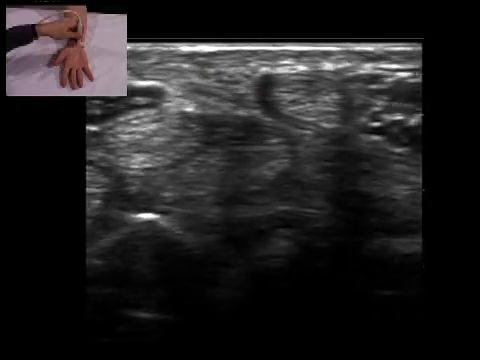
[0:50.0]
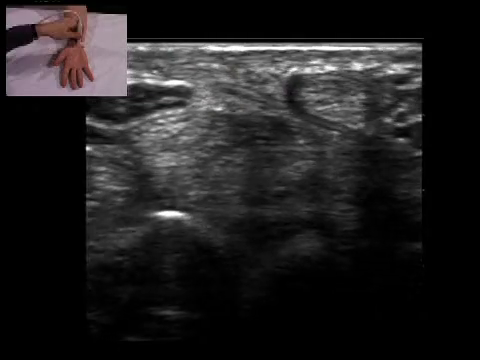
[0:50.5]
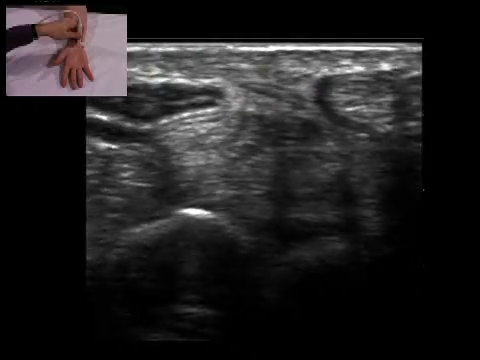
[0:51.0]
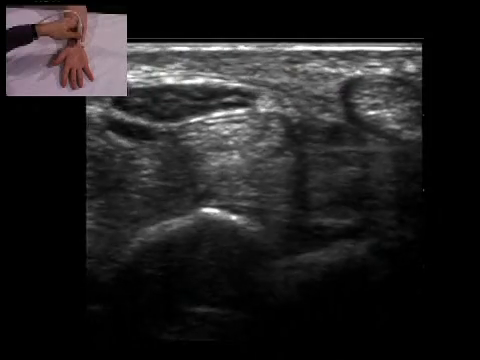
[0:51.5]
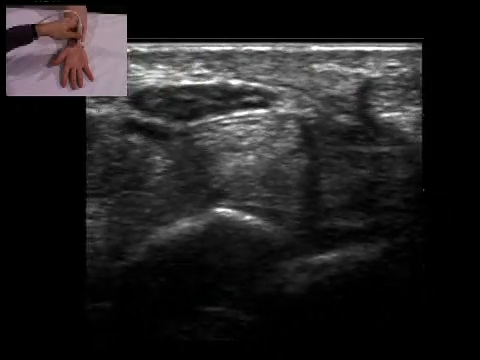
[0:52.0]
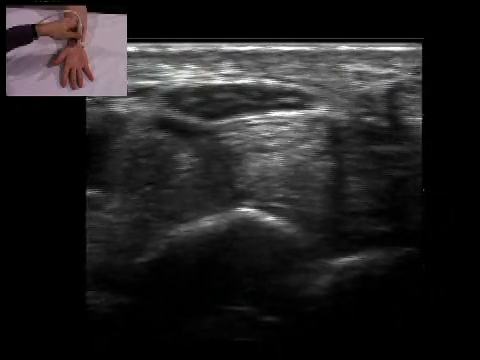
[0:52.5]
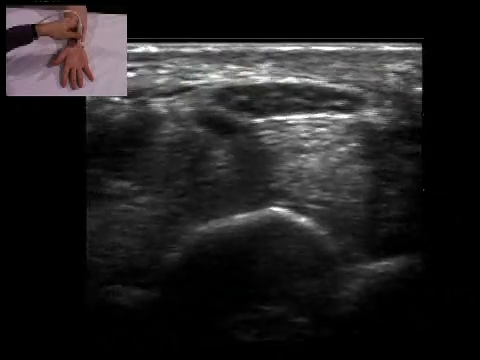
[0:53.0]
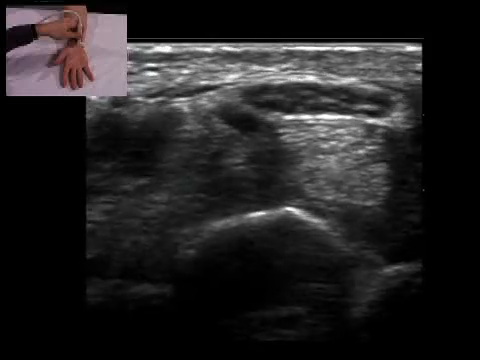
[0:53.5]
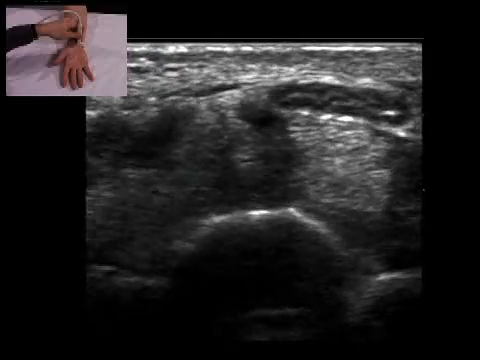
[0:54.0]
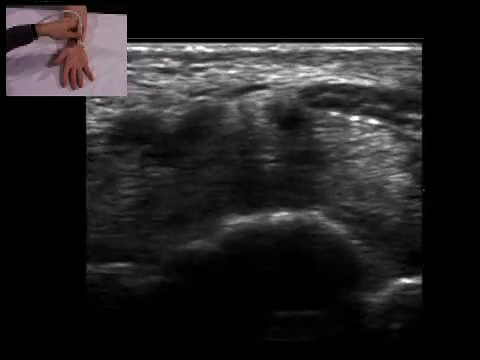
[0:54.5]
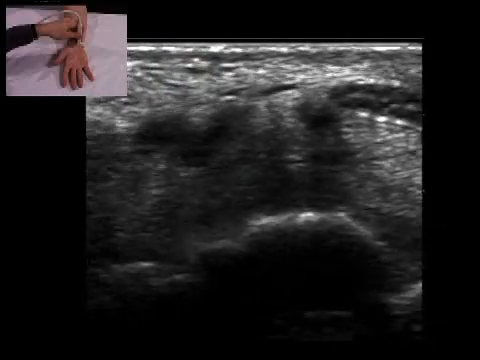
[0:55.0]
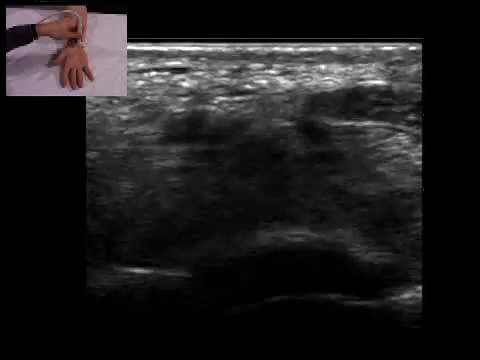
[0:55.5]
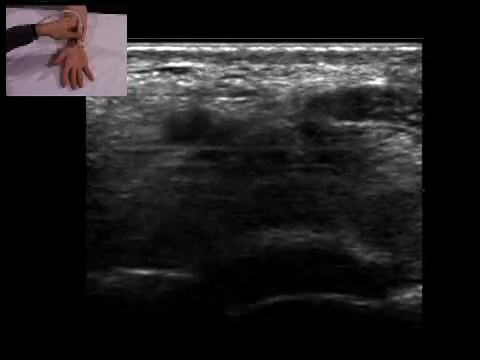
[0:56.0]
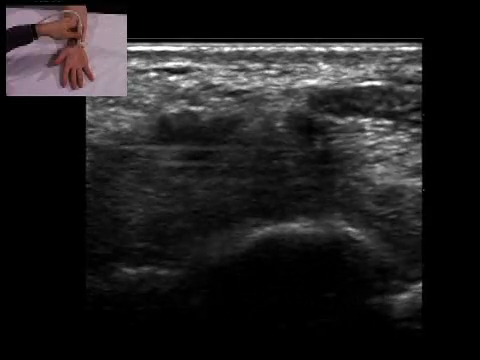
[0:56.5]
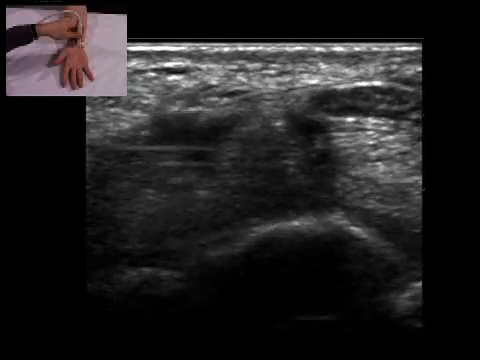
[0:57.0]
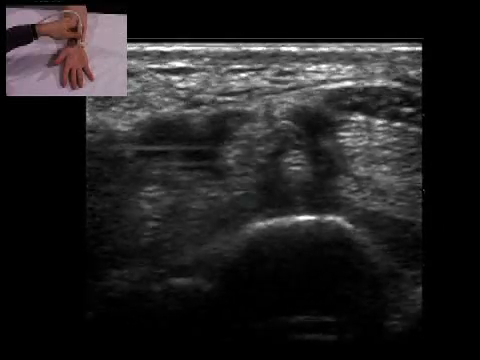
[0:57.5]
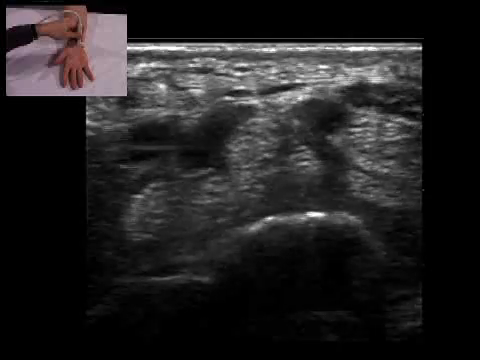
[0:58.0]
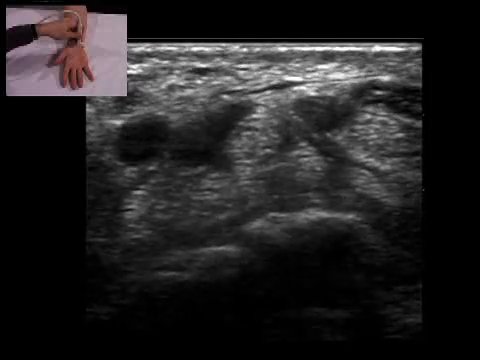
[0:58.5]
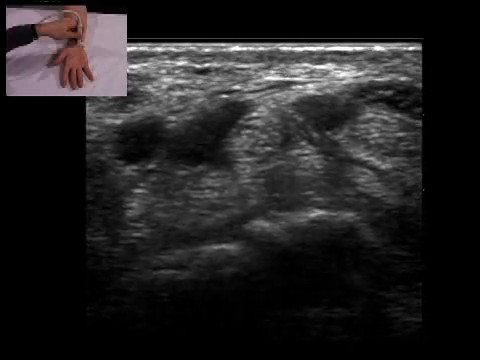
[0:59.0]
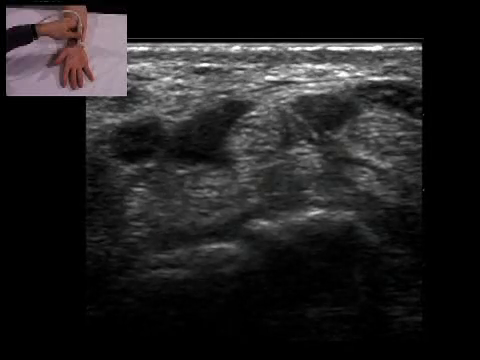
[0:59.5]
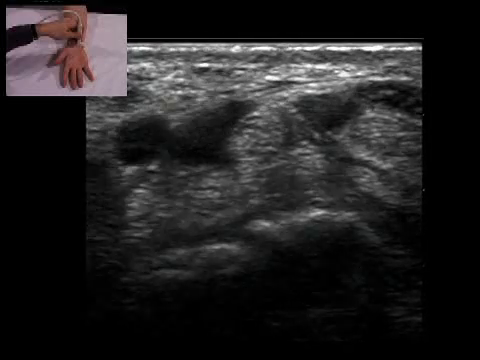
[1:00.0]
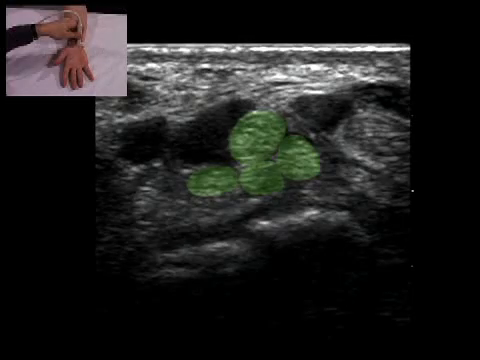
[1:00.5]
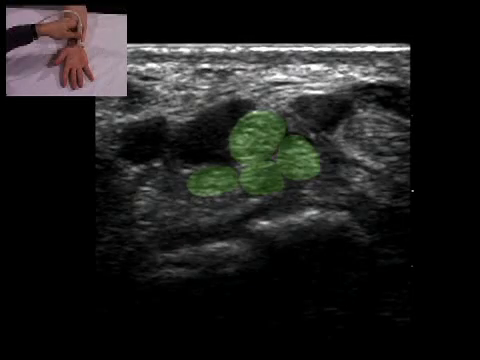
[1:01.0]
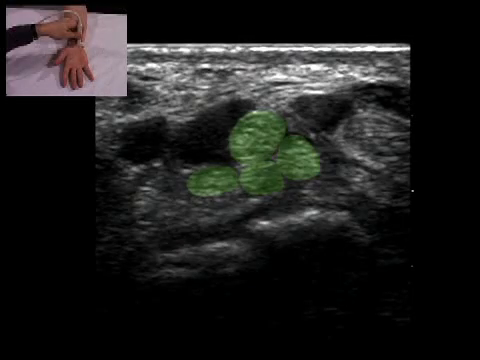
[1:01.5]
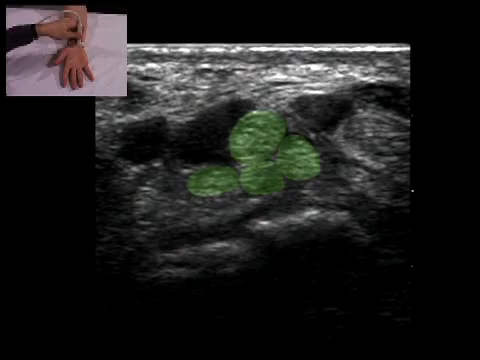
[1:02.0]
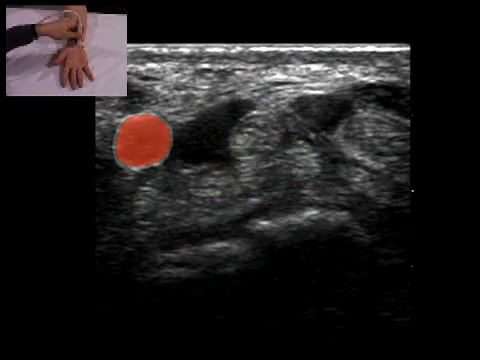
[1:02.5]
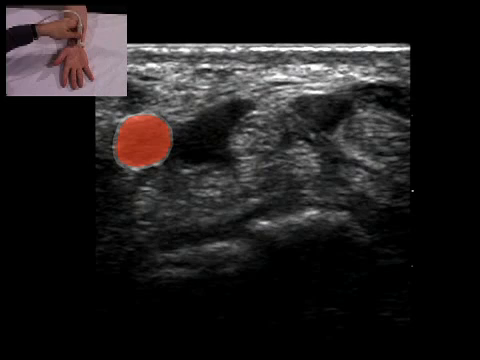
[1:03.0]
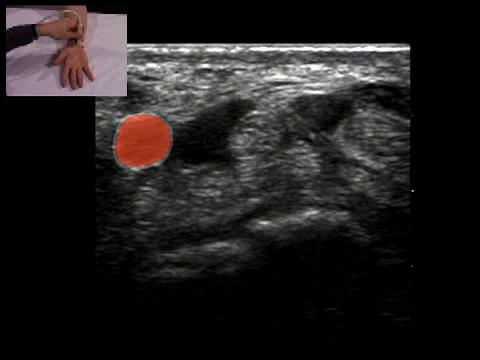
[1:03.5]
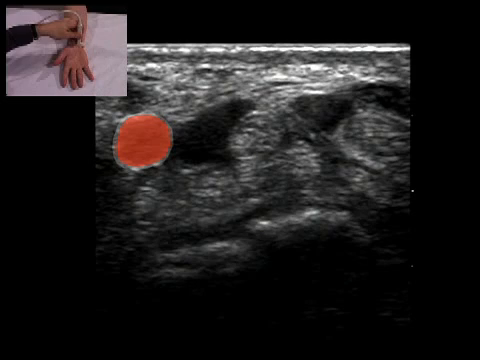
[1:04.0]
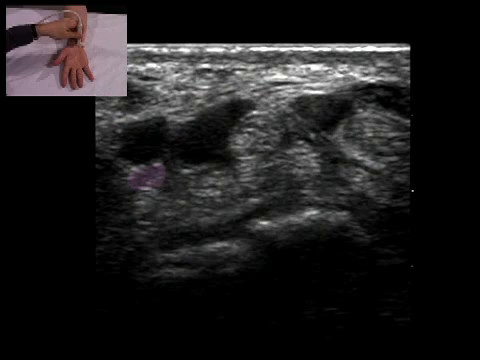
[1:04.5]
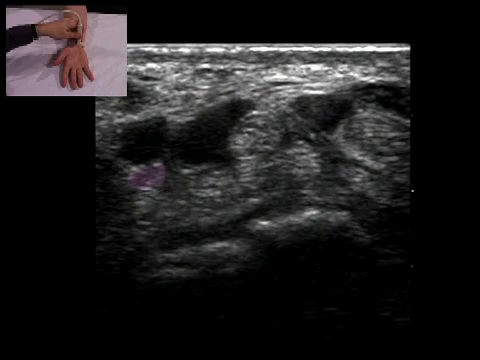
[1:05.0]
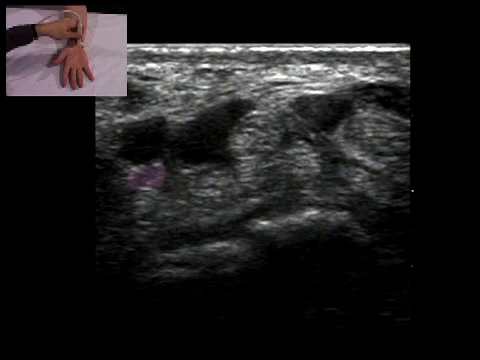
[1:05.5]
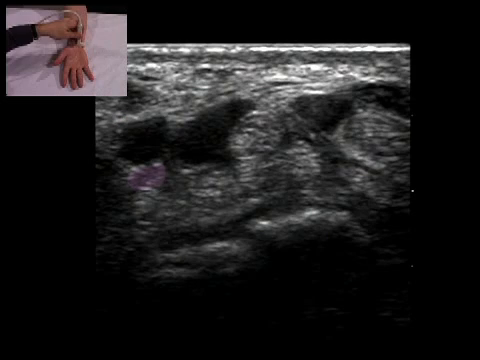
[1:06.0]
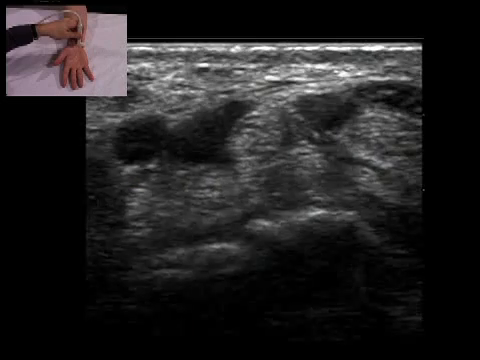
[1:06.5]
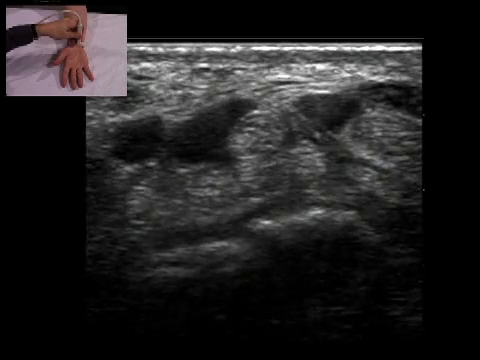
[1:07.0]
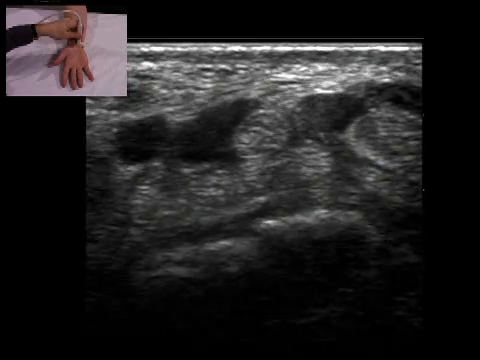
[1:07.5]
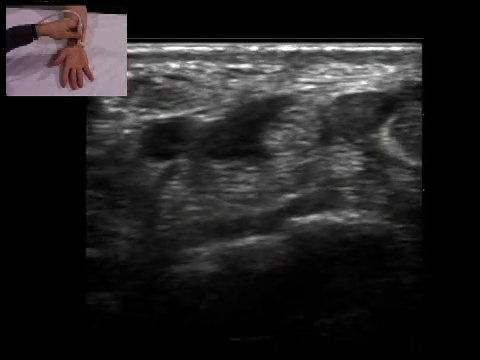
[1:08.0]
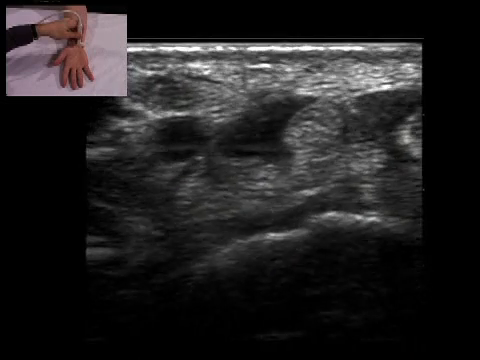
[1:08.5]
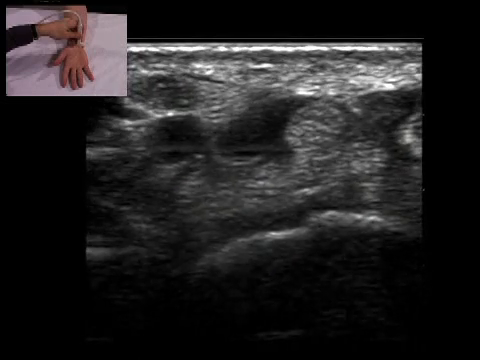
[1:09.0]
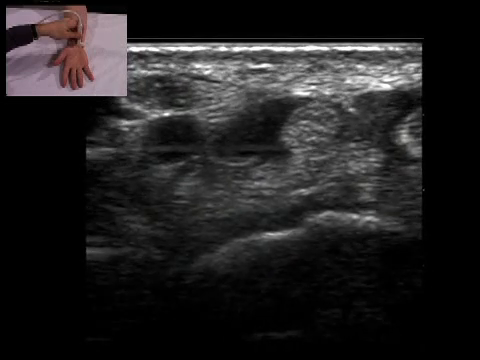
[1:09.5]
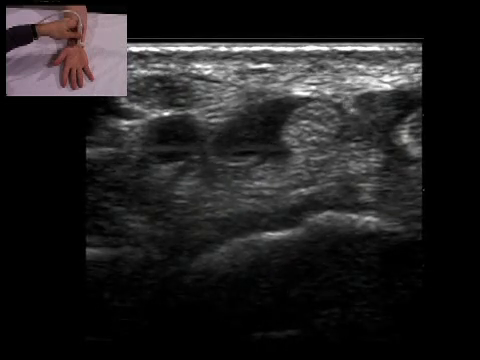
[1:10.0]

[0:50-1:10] The camera pans back to the initial starting area and moves a bit further left. The muscle area contracts a lot, moving everything to the right a bit. To the left of the shield-shaped space there is a circle with a shark-fin shape to its right, which shifts to the right. To the right of the shark-fin area, four balls are highlighted in green, and to the left of that, the circle is highlighted in red for a bit. A small groove below it is highlighted in very faint purple. The muscles then move to the right a little as the camera moves with them.